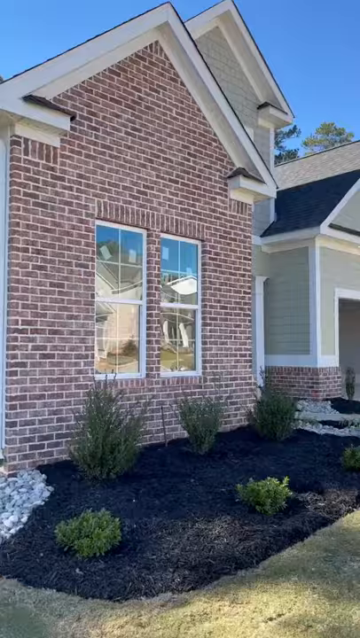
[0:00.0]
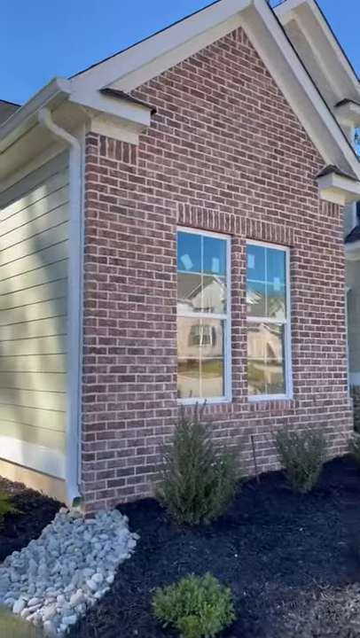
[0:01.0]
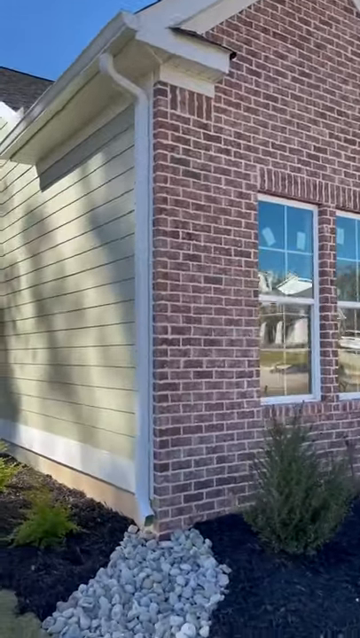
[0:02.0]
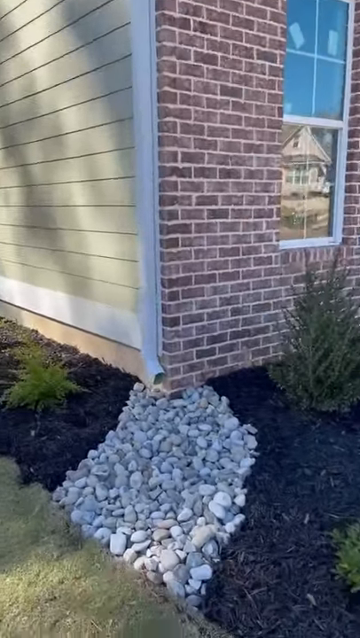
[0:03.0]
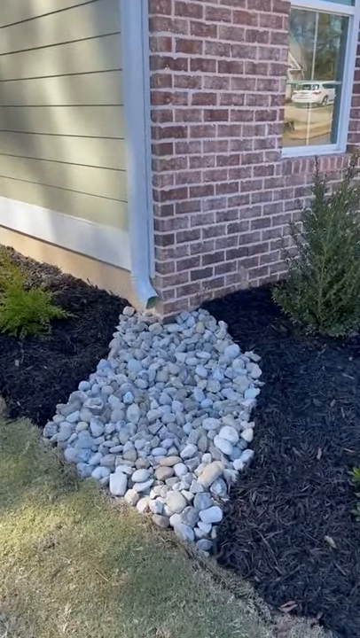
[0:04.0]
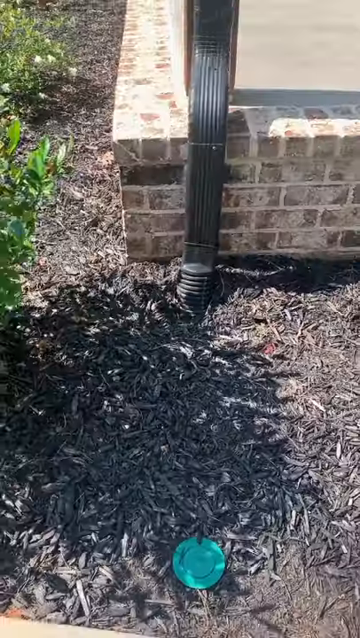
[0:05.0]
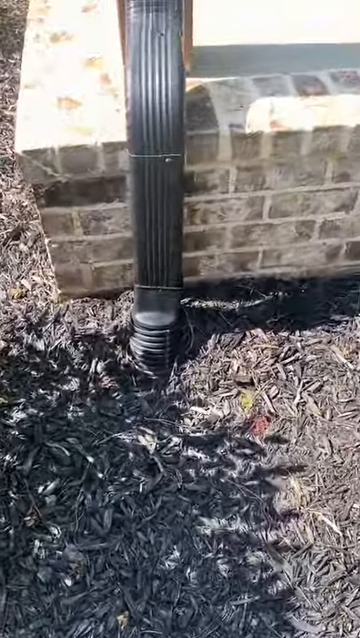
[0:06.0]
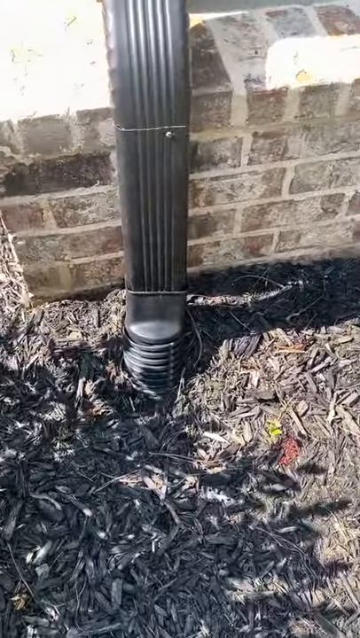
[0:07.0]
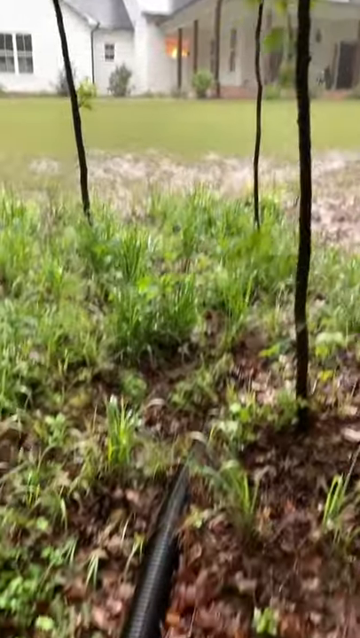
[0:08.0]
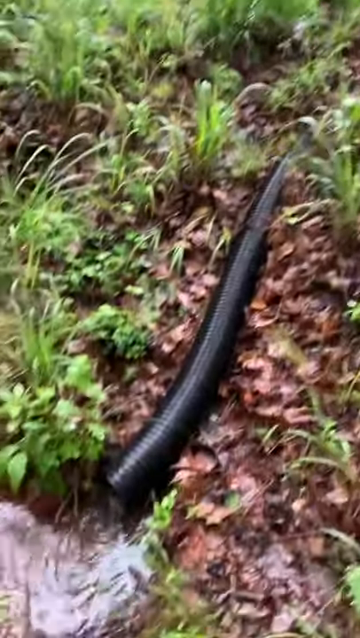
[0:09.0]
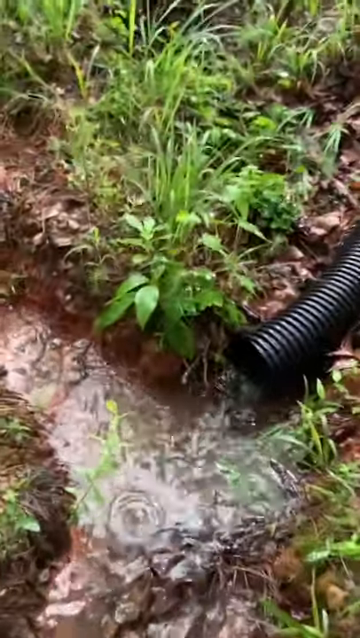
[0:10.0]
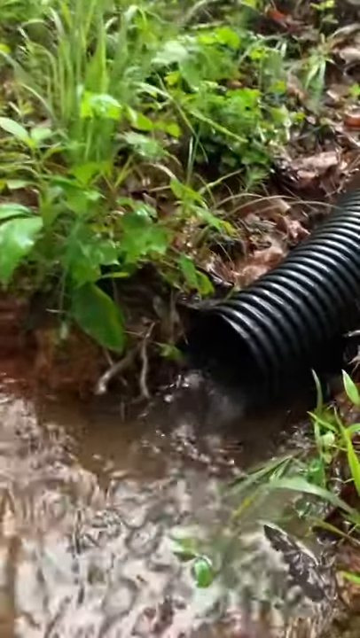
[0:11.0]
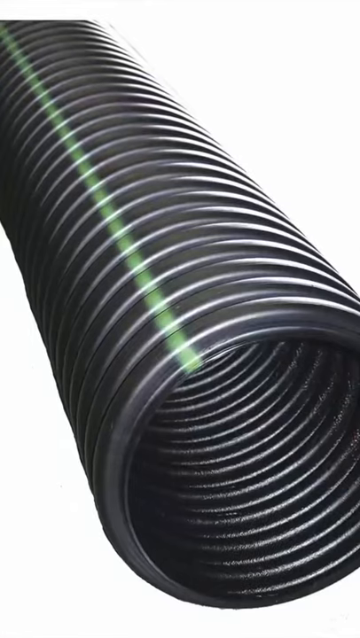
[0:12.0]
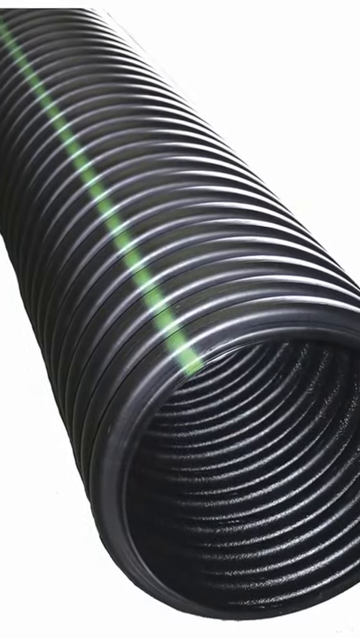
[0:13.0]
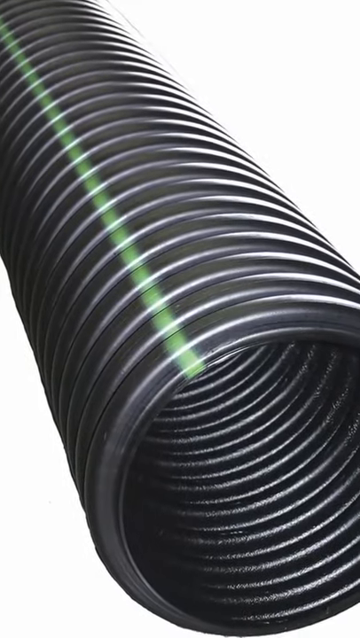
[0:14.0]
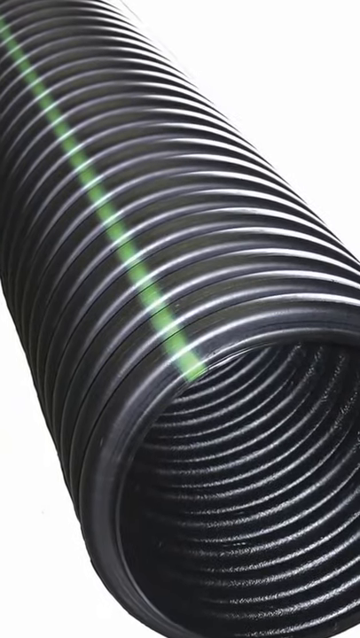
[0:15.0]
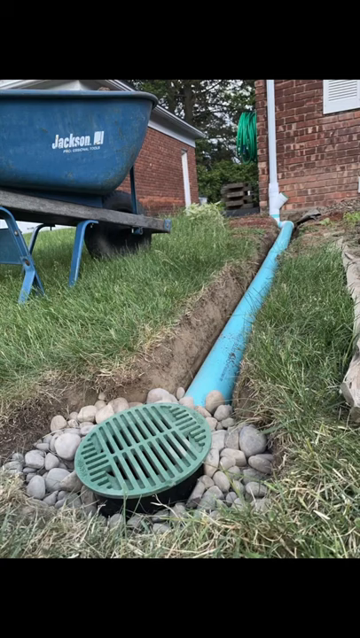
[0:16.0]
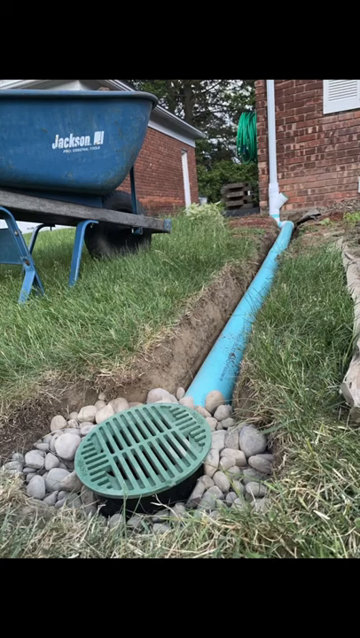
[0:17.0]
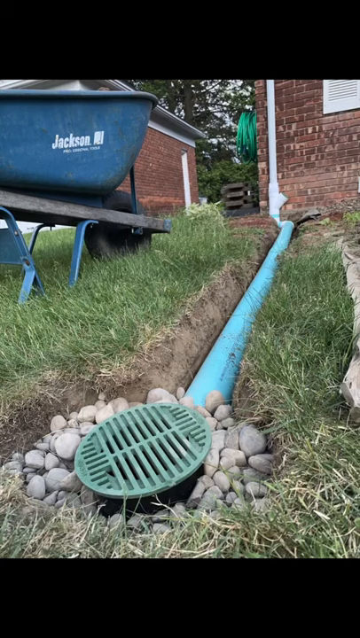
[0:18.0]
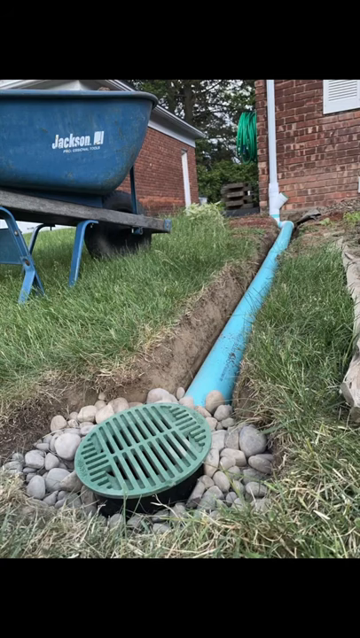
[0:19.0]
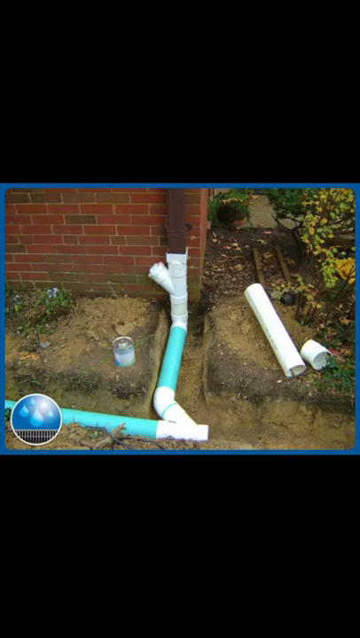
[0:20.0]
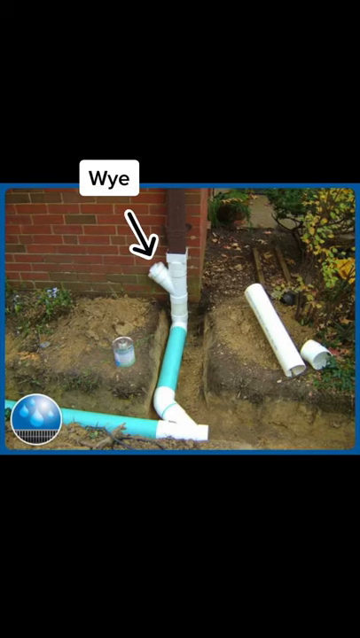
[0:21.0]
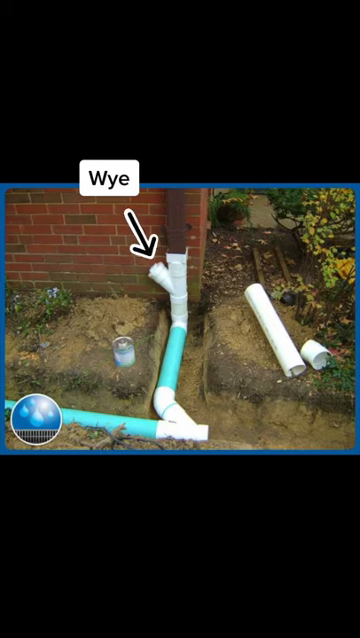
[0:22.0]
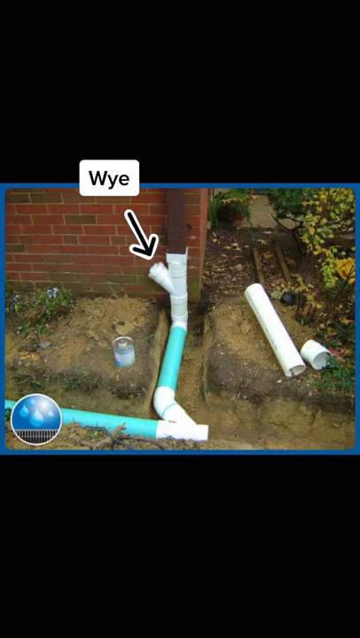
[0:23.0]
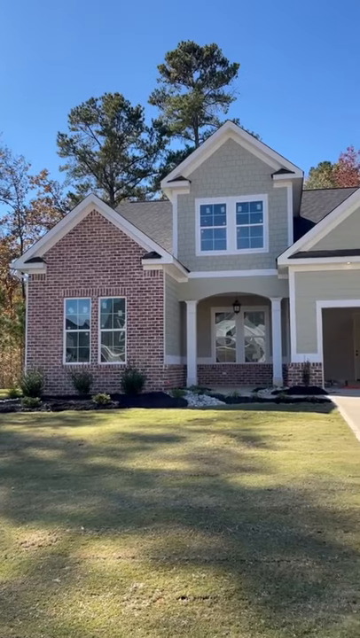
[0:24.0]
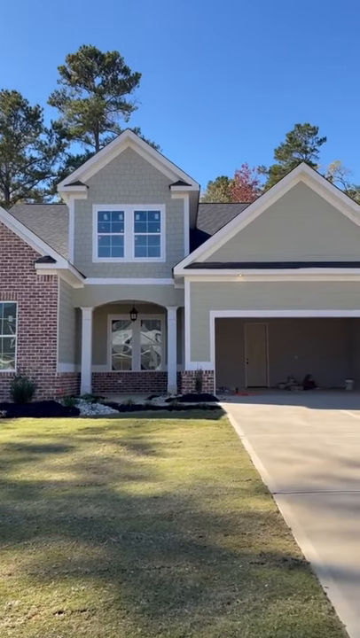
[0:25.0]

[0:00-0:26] The video opens with an exterior shot of a house that looks like it is in a suburb. The front has a kind of reddish brick exterior, and the side appears to have a yellowish, light tan, flat exterior. The camera then zooms in on the house's different pipes and drainages. It looks at one long black drain that is kind of lying in the yard and sort of zooms in on it, and water is coming from the drain. In the next scene there is what looks like a picture of a drain on a white background: a long black tube with ring indents going around it. The next scene is an image of a drain in a yard, with what looks like a brick house. A white drain is attached to the house, and where the drain is on the floor it turns a light turquoise color until it goes into a covered circular vented area surrounded by rocks. The next image shows another white and blue drain against a brick house, with a black arrow pointing to the top of the drain and a caption in a white box with black spots that says "WYE". The last shot is of the house, a nice suburban house made of red brick with some gray side paneling, a long white driveway and a green lawn.